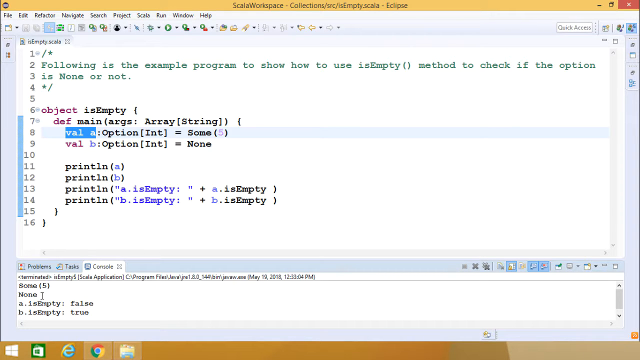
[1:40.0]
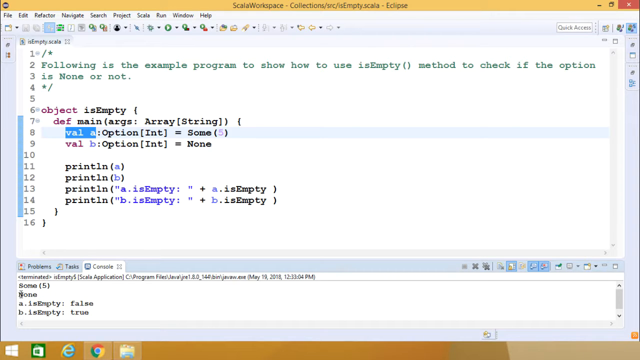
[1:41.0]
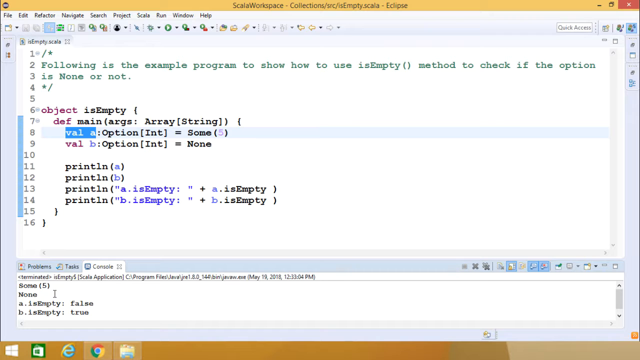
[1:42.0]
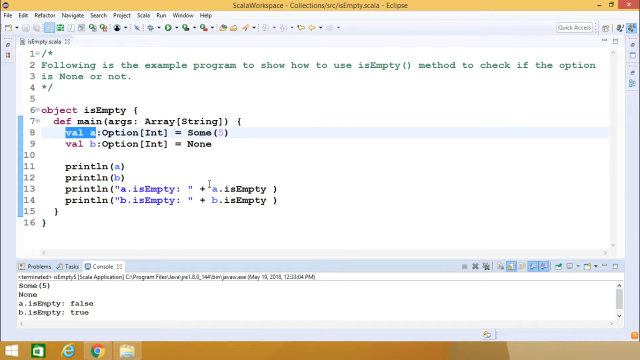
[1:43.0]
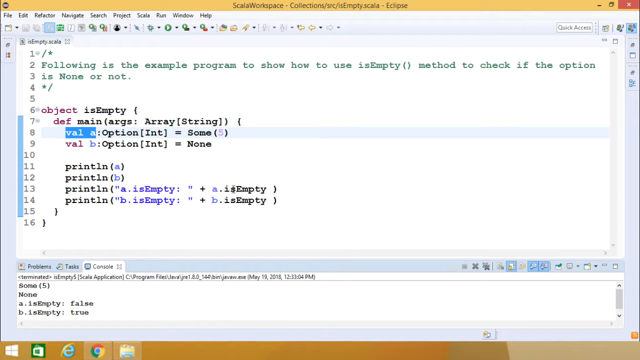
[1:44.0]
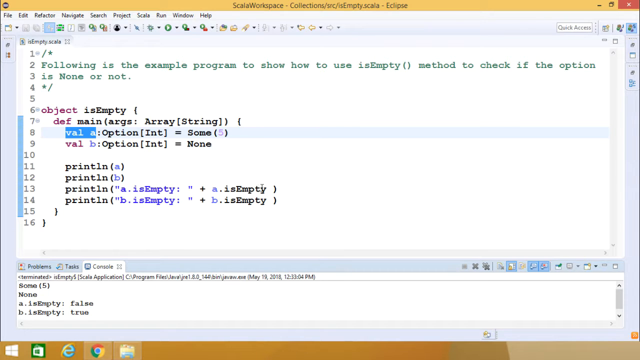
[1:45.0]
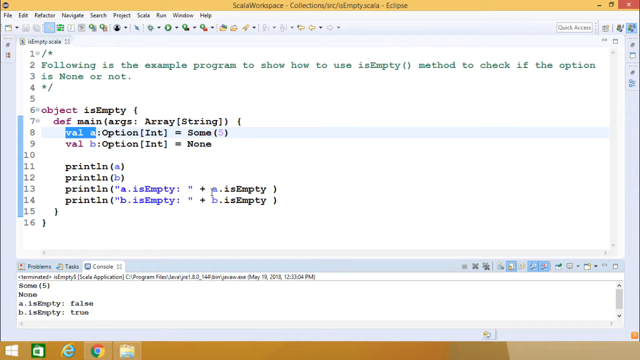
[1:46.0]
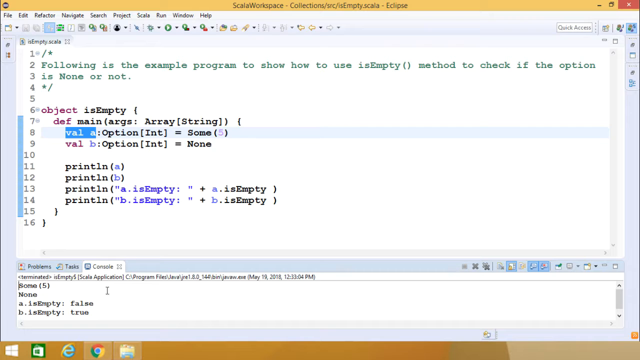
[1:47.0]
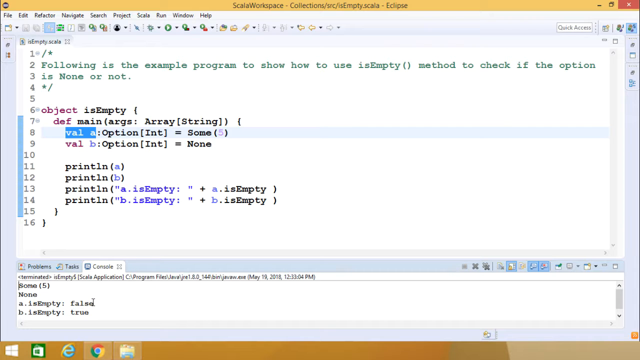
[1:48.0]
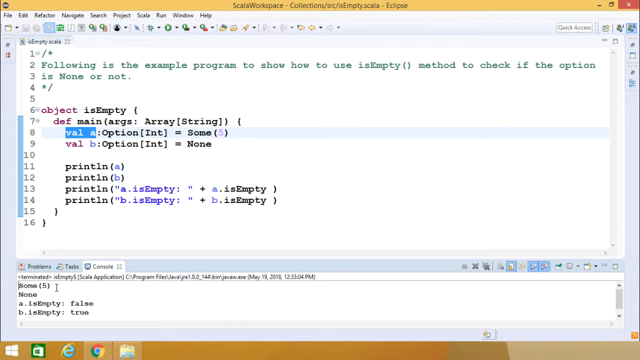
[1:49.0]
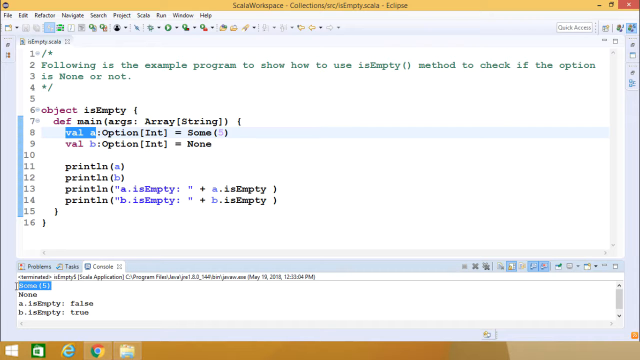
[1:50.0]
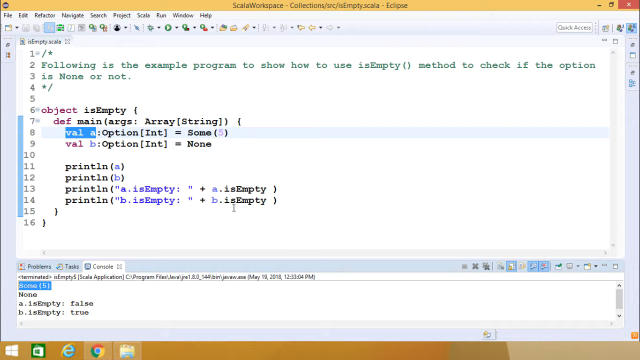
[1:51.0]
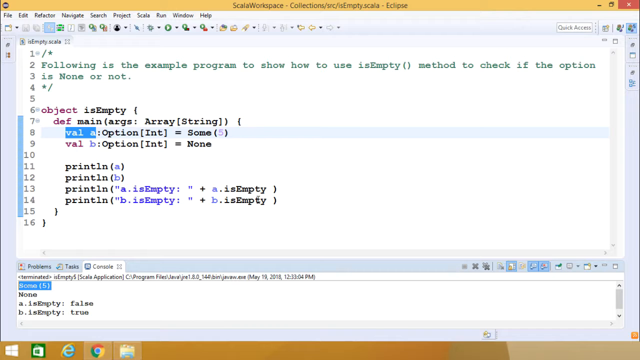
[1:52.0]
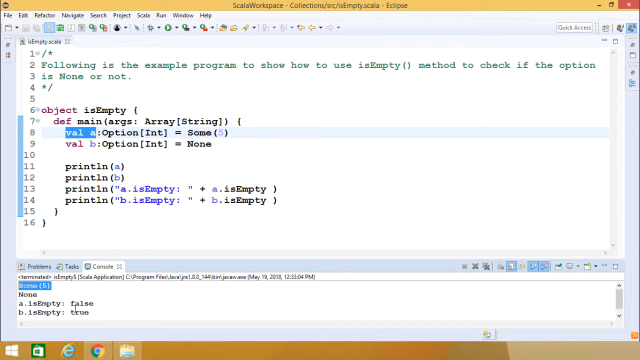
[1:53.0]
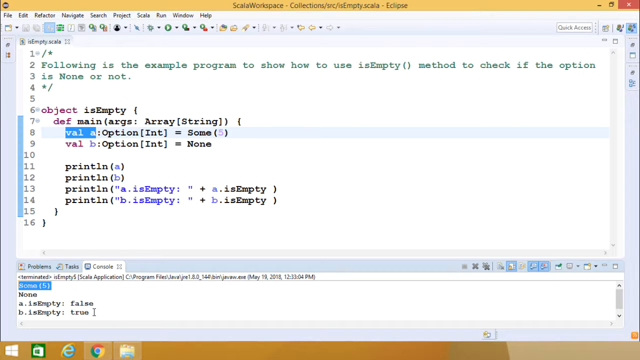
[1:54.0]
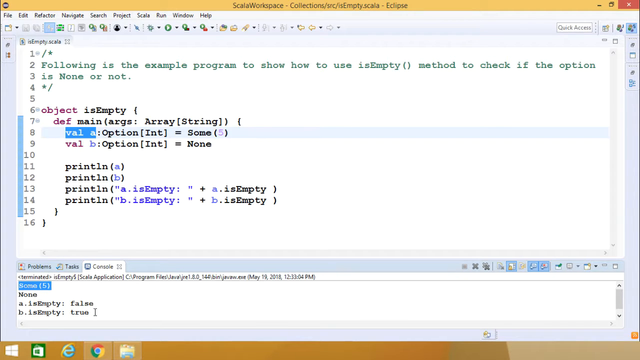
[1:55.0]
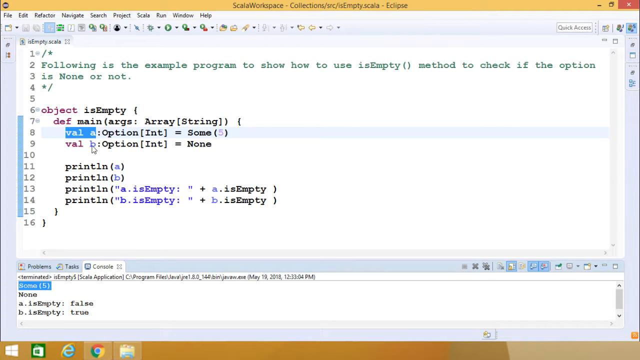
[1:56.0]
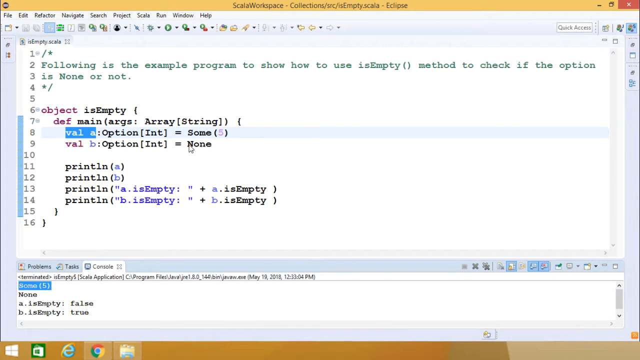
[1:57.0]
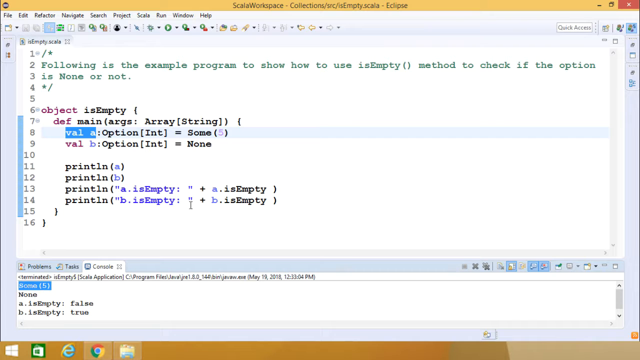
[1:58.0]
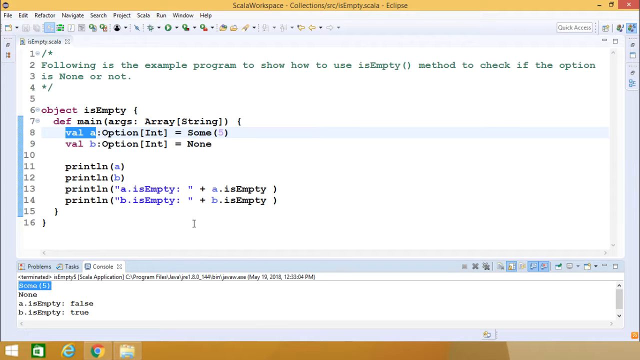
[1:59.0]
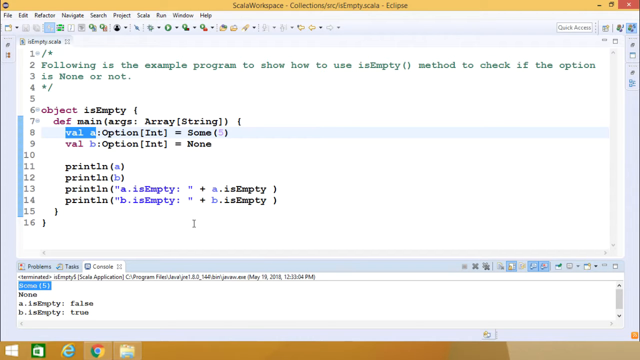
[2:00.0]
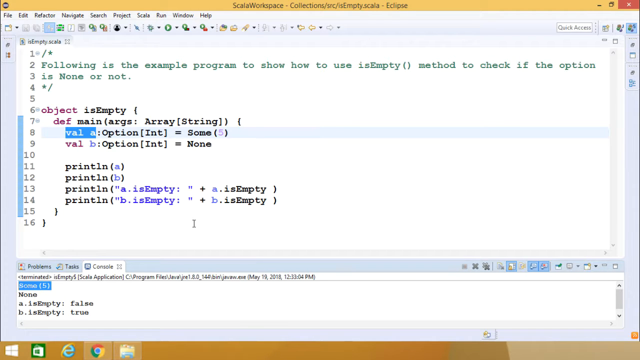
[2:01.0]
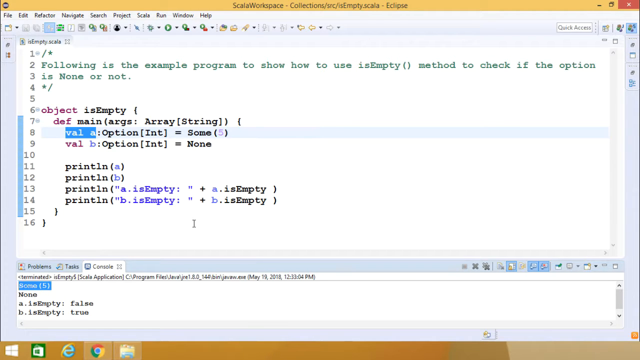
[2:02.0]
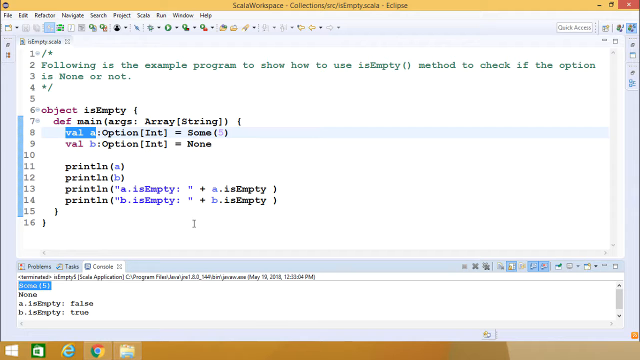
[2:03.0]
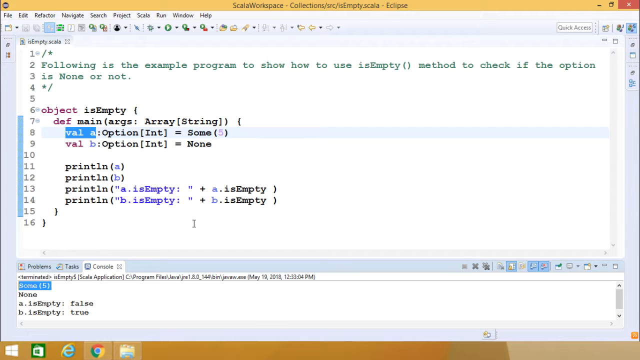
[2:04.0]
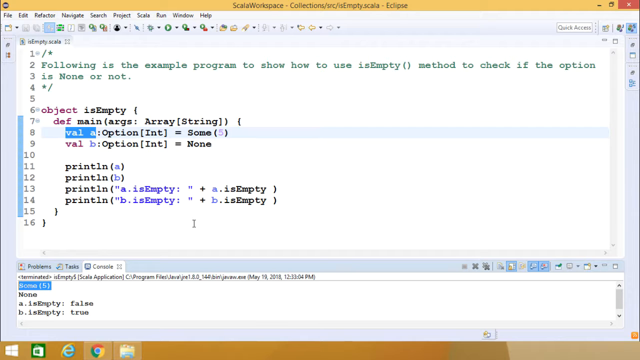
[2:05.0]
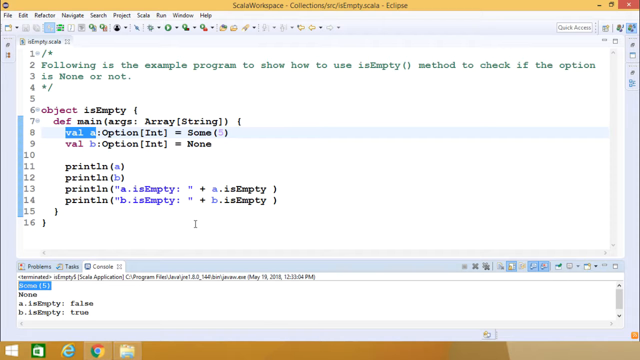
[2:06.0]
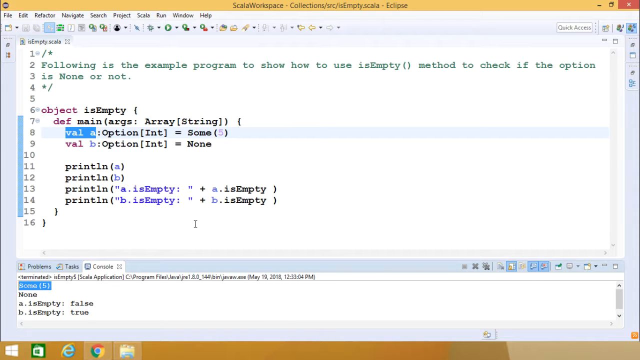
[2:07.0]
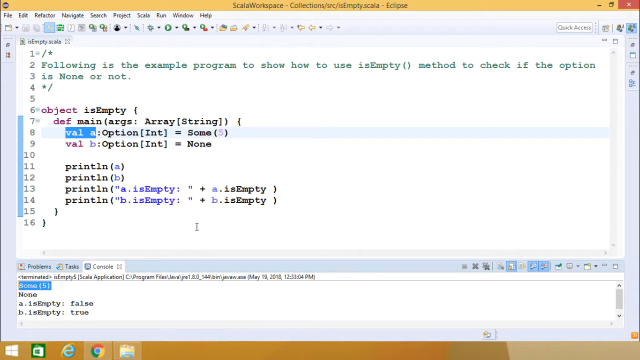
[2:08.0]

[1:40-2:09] The tutorial shows a text editor whose top reads Scala workplace. Below that, buttons run across the very top of the editor: file, edit, refractor, navigate, search, project, scale, run, window and help. The code on the page runs through lines 1 to 16; lines 1 through 5 have no code, and the code begins on line 6. Lines 2 and 3 hold an explanation reading "following is the example program to show how to use is empty method to check if the option is none or not". The person moves the mouse pointer or cursor around the page. The console tab below the code is being filled in with an A line and a B line: A is false and B is true. The person continues moving the pointer around the page.